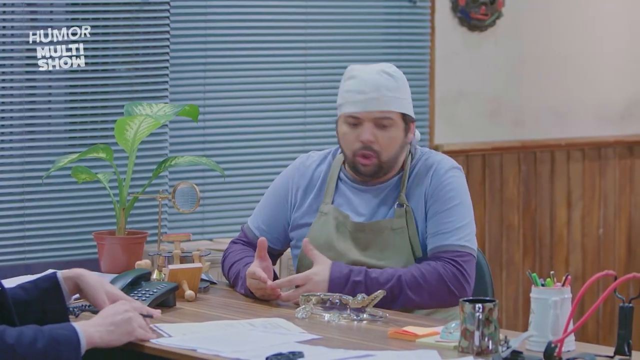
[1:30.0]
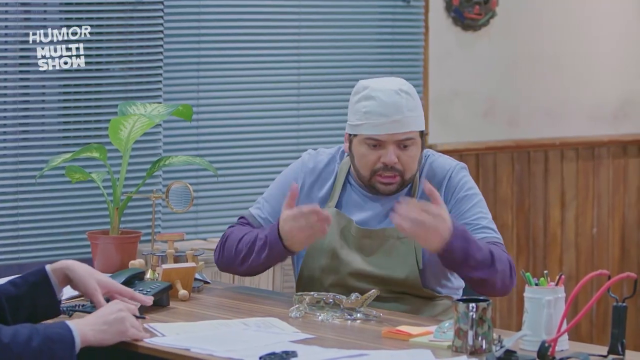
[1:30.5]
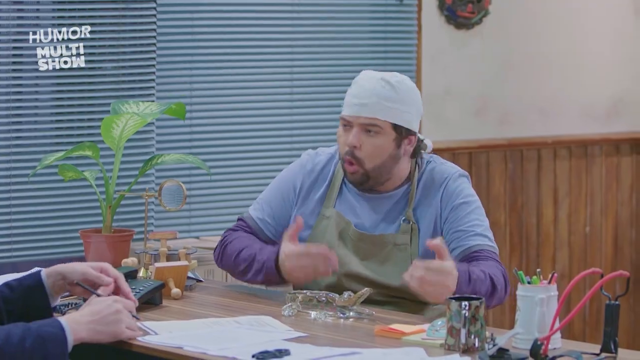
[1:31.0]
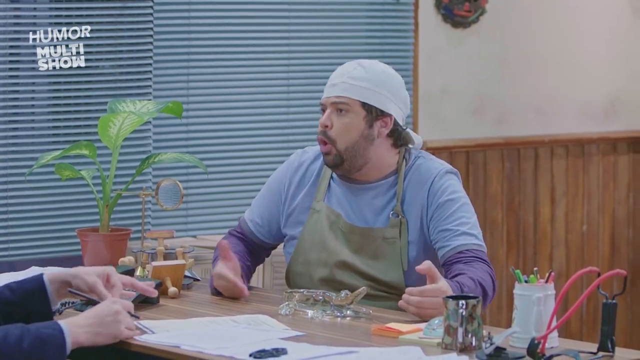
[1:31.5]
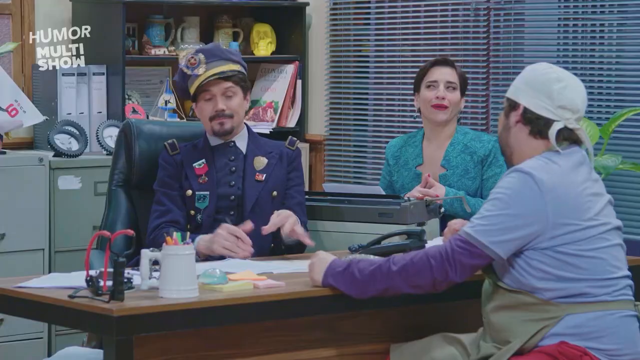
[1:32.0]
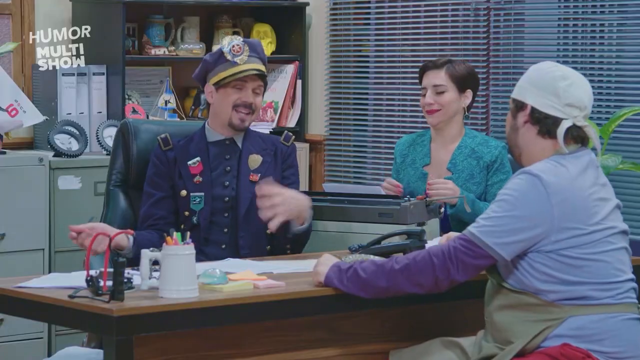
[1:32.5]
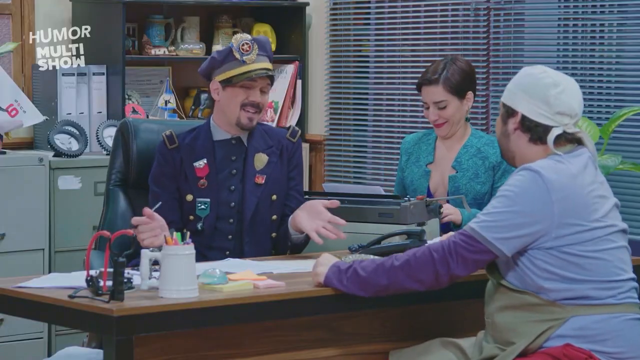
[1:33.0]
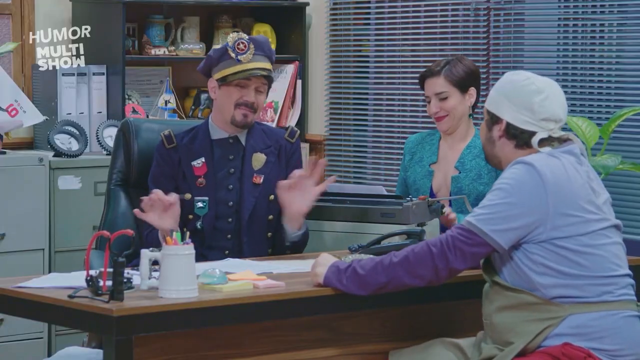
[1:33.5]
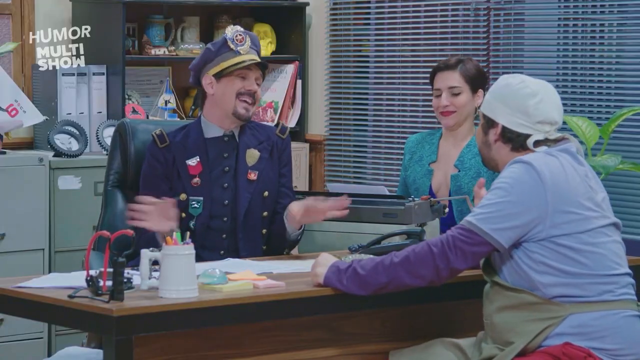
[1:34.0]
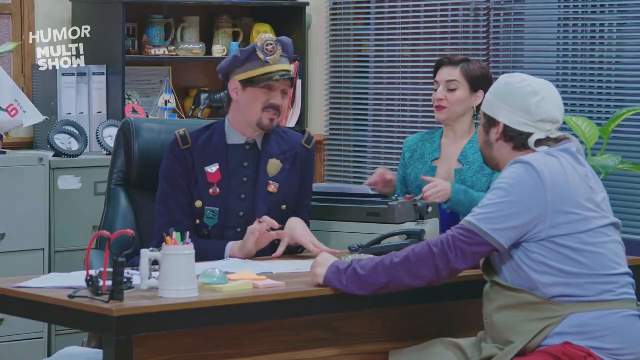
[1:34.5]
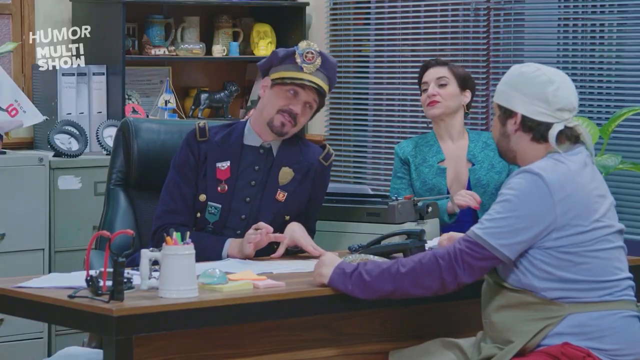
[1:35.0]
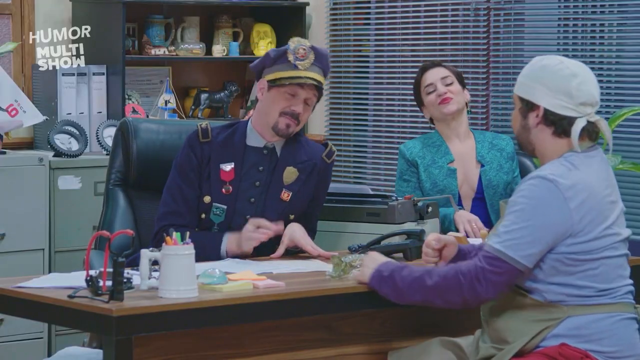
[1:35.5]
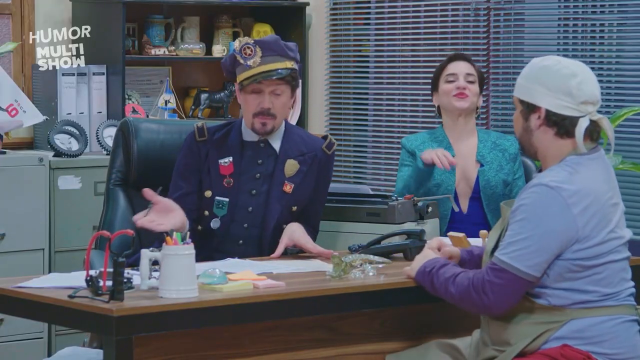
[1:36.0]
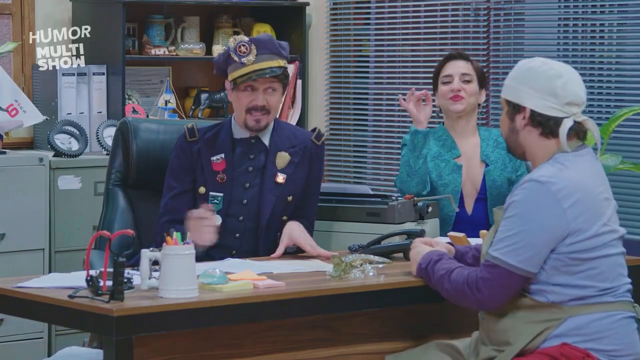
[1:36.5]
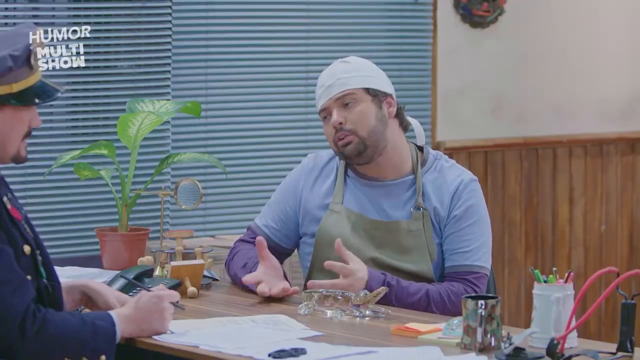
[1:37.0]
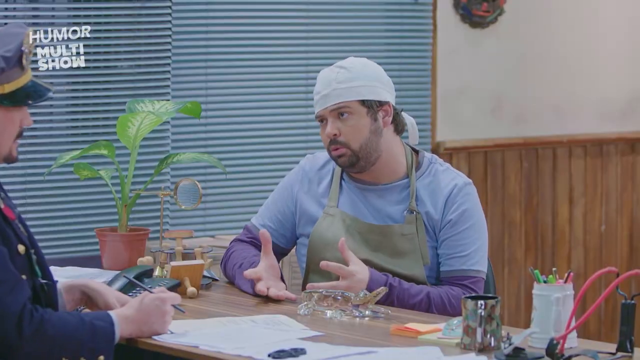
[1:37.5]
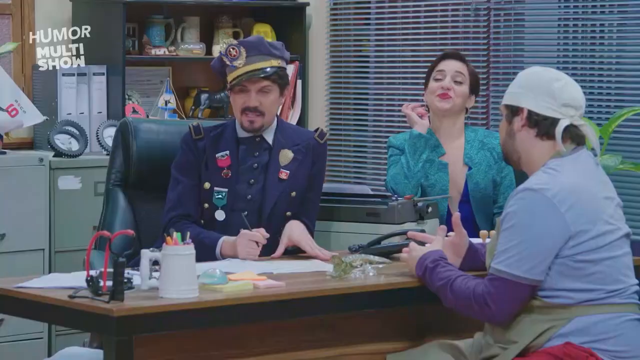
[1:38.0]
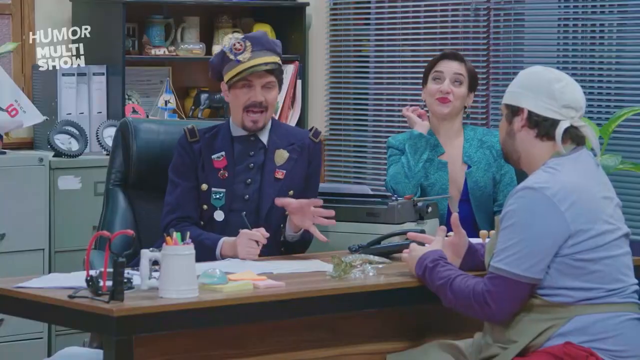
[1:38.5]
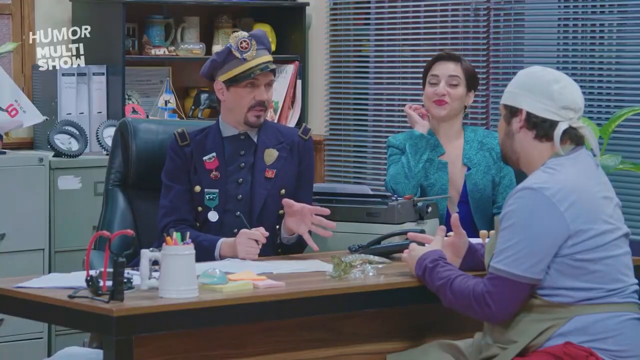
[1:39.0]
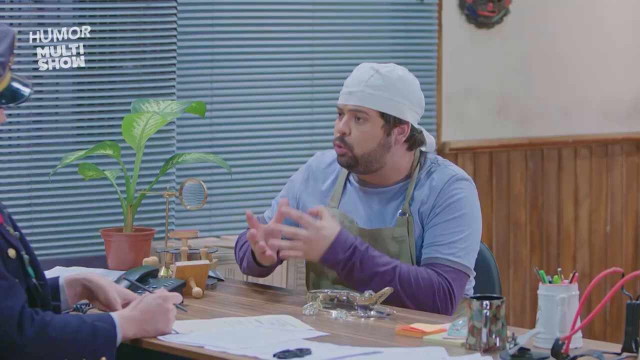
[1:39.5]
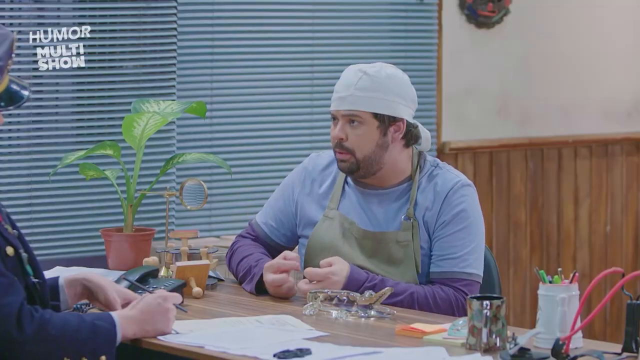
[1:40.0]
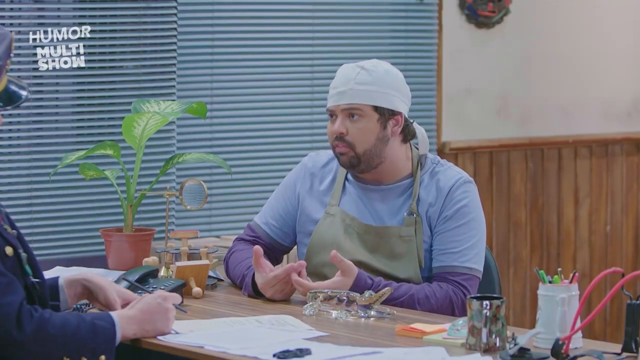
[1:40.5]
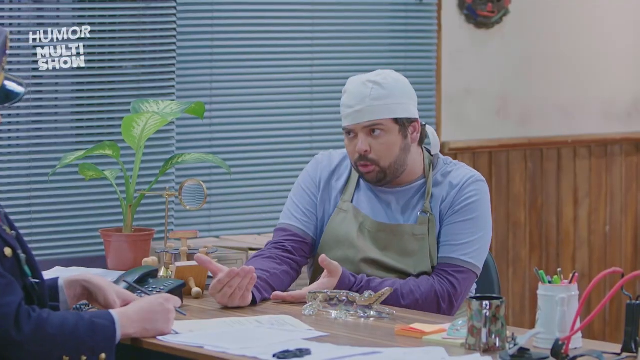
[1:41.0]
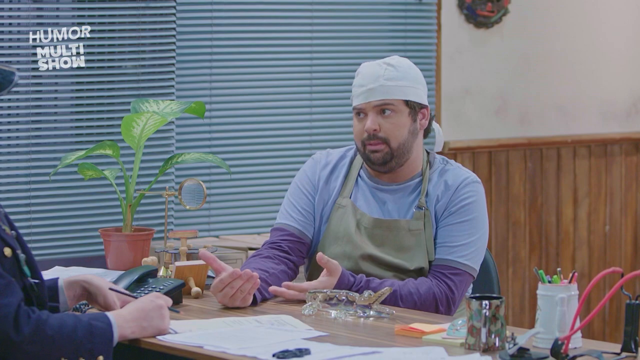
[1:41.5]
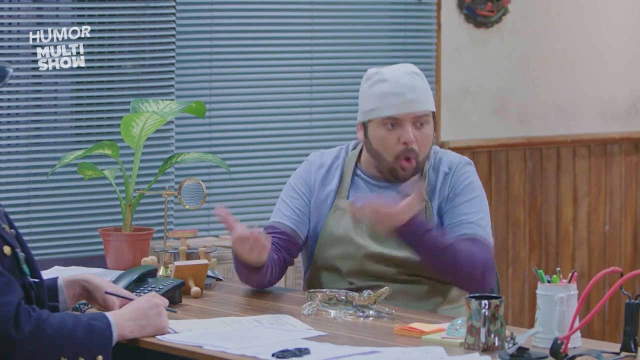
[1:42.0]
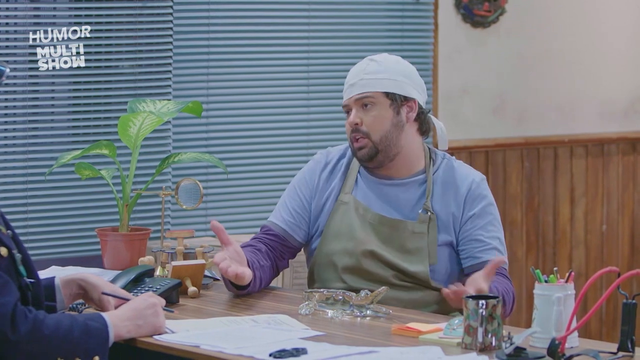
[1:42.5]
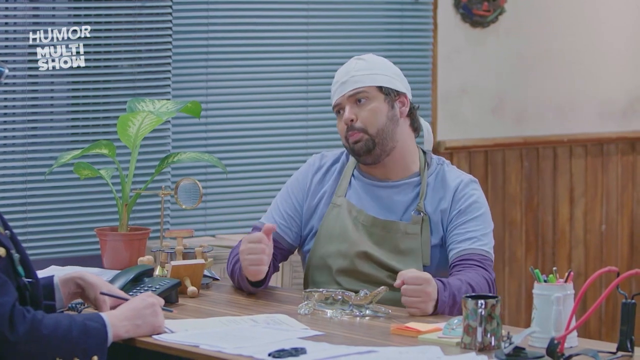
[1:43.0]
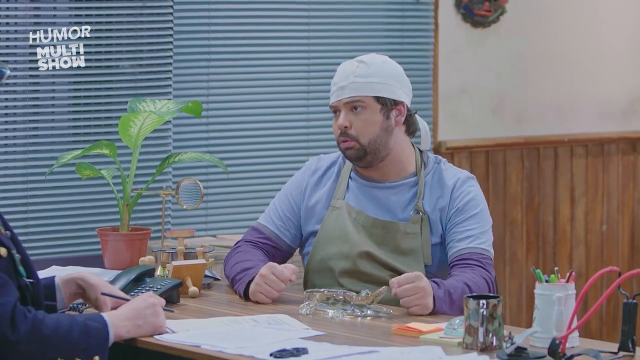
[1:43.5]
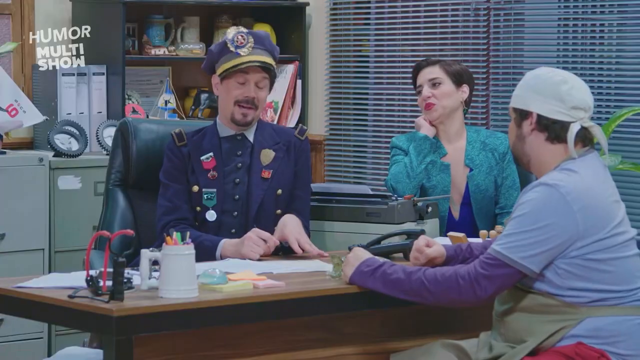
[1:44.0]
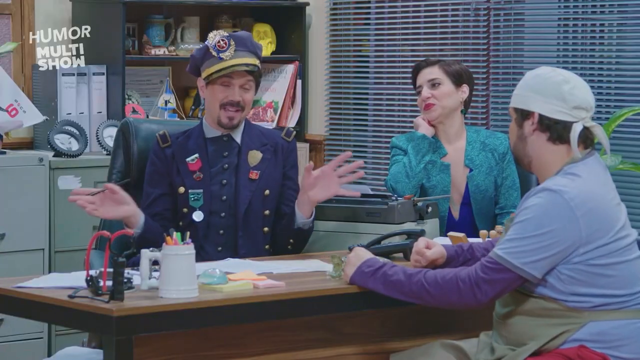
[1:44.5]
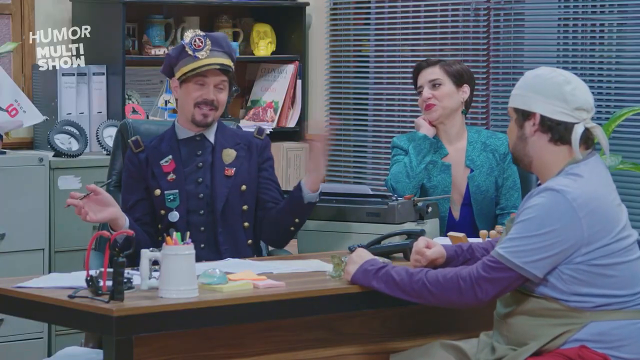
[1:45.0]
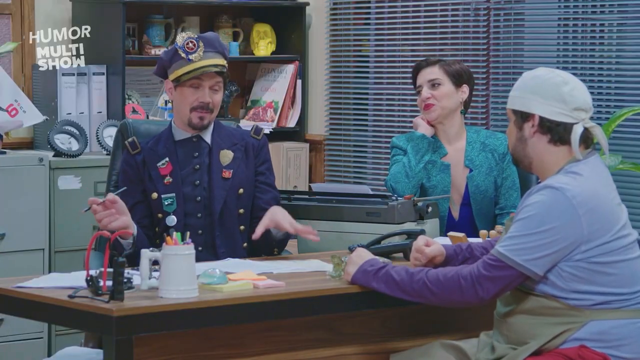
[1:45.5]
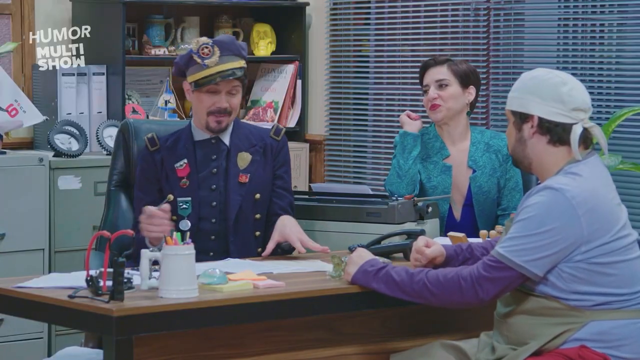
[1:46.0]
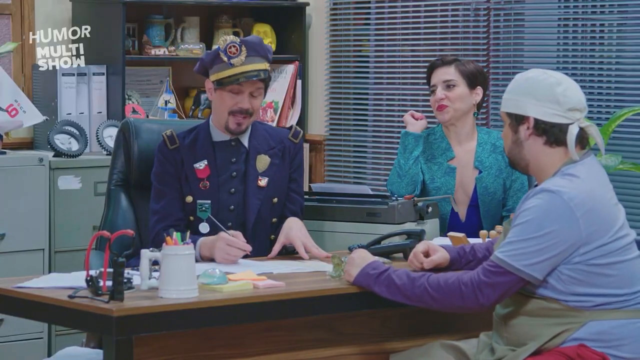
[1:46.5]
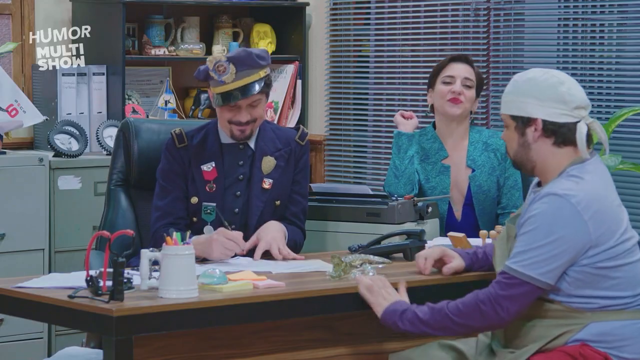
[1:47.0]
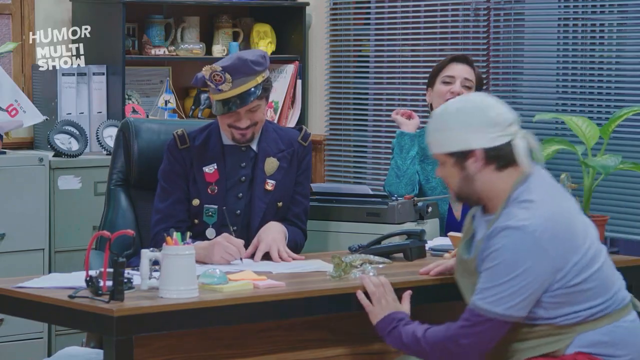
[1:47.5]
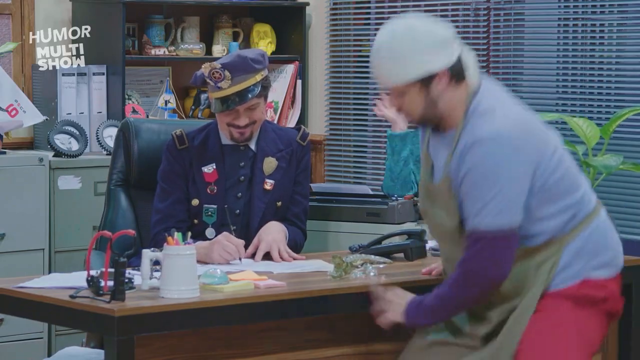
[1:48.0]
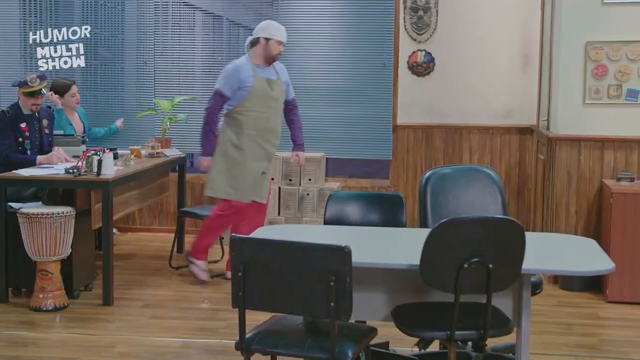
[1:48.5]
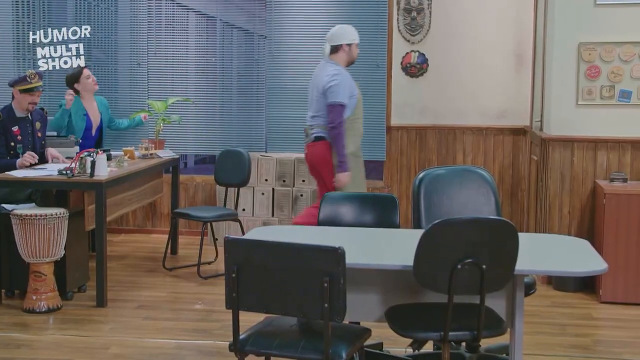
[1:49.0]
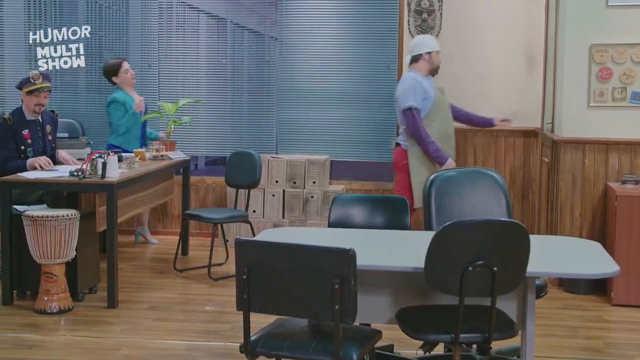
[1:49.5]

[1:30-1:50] The effeminate man in the military suit talks a bit more and waves his hands around, while the lady at the typewriter rolls her eyes and makes silly faces and hand motions. His military suit has three medals, two on the right side and one on the left. There is a cup used as a pencil holder. The man in the surgeon's hat gets up to walk out the door, and the lady at the typewriter, apparently finished typing and deeply engrossed in the conversation, gets up as he leaves. As he walks out, another, smaller table with four empty chairs is visible off to the side.